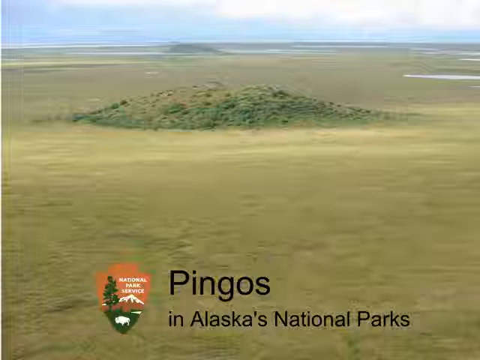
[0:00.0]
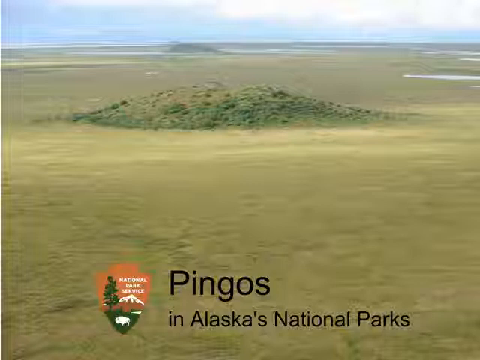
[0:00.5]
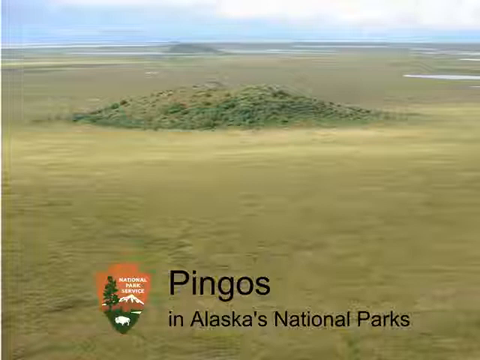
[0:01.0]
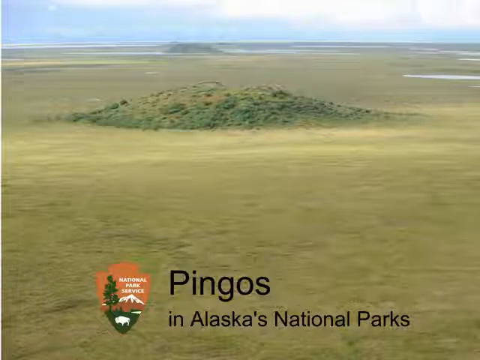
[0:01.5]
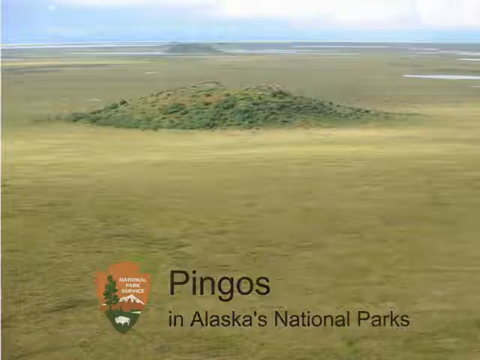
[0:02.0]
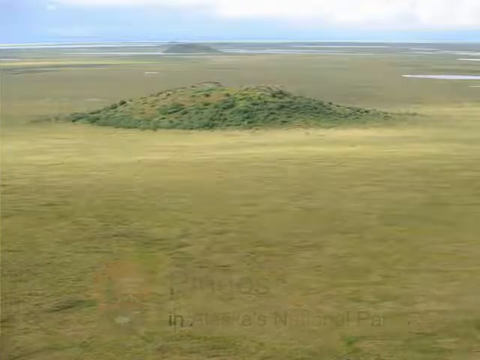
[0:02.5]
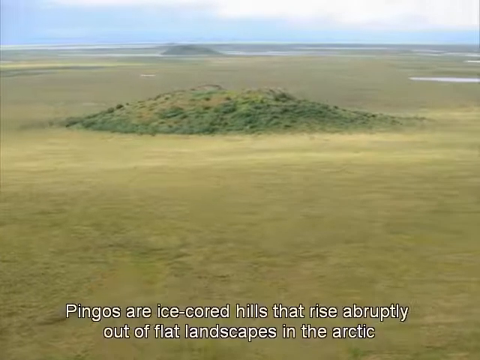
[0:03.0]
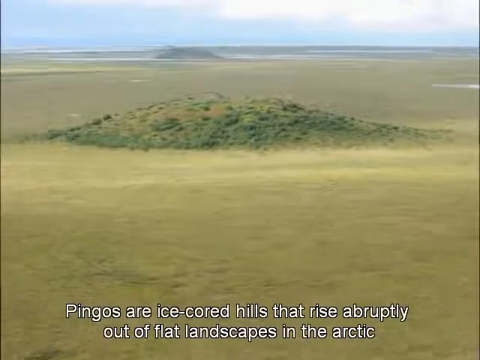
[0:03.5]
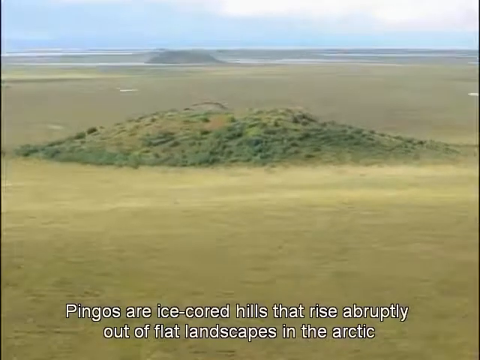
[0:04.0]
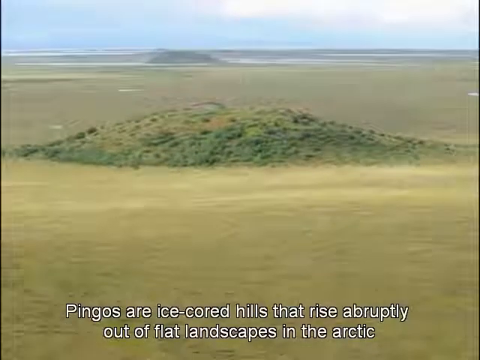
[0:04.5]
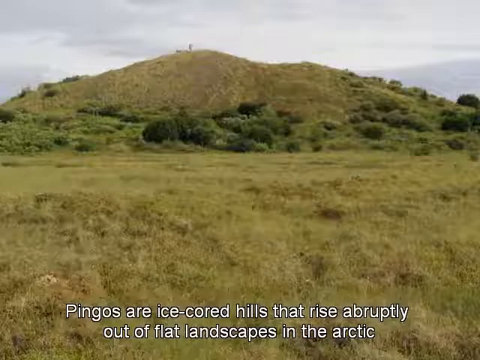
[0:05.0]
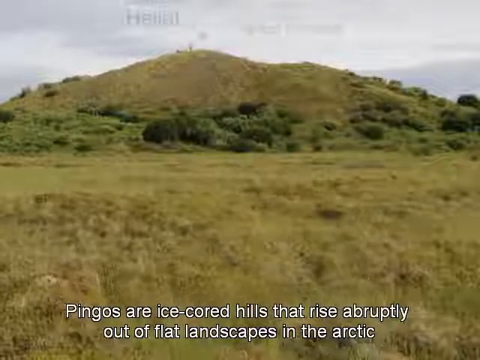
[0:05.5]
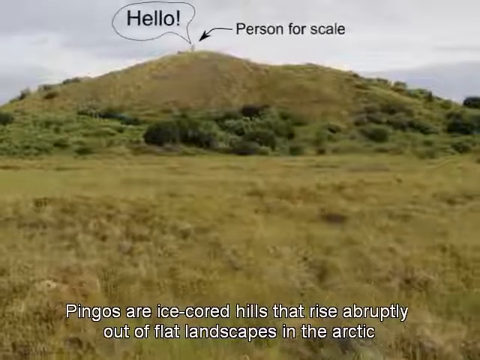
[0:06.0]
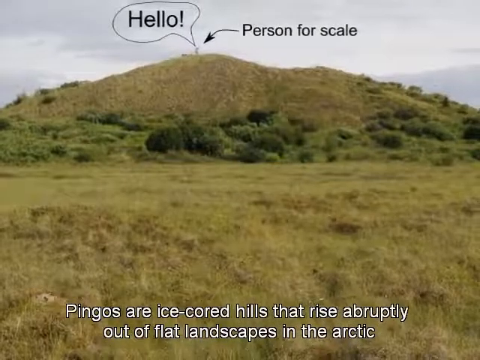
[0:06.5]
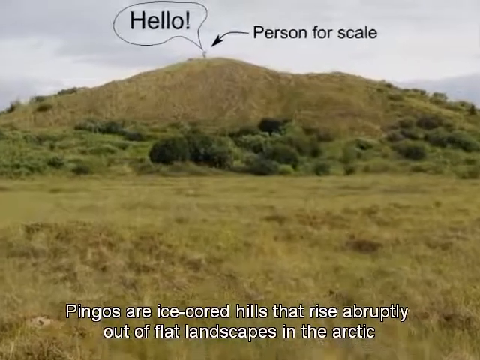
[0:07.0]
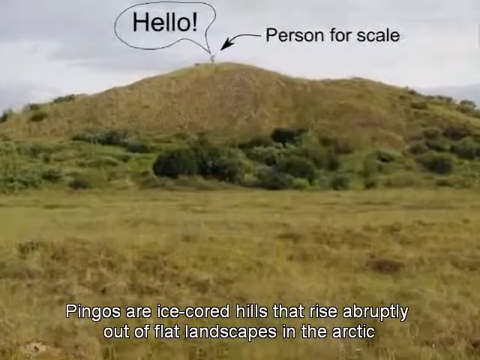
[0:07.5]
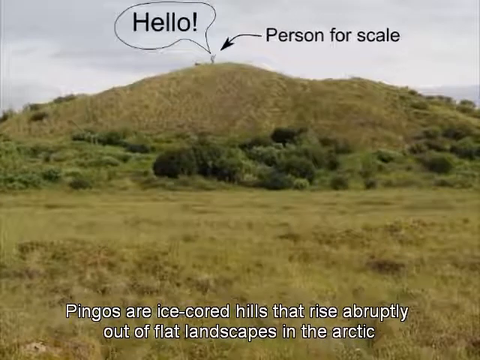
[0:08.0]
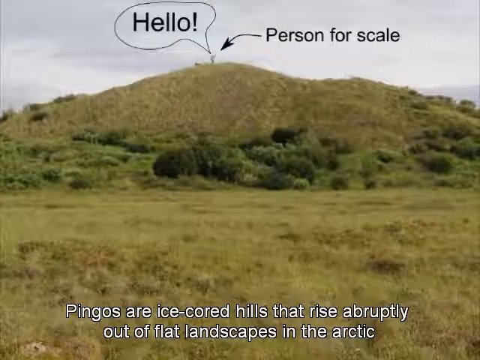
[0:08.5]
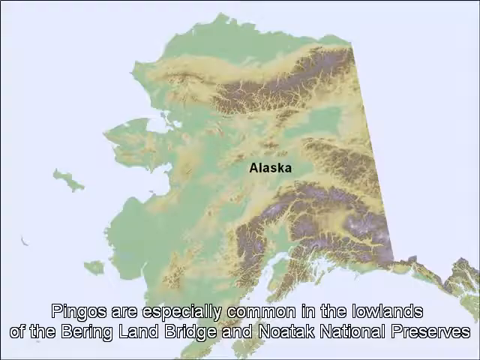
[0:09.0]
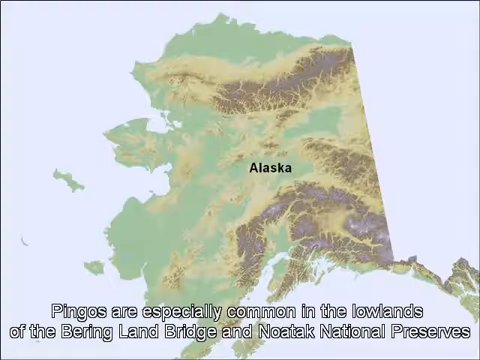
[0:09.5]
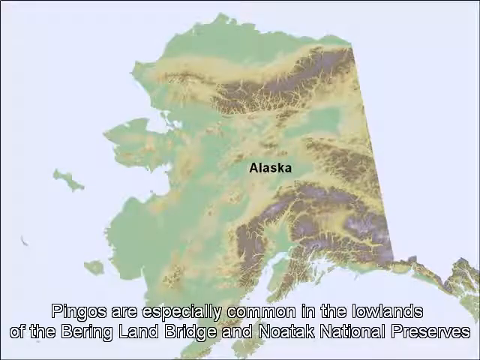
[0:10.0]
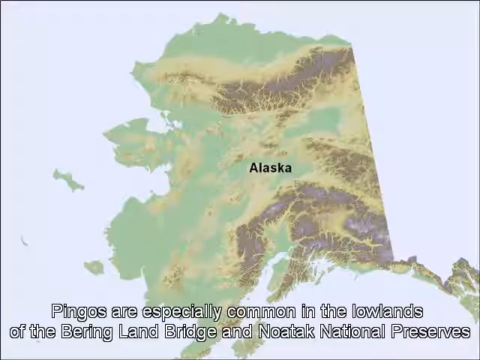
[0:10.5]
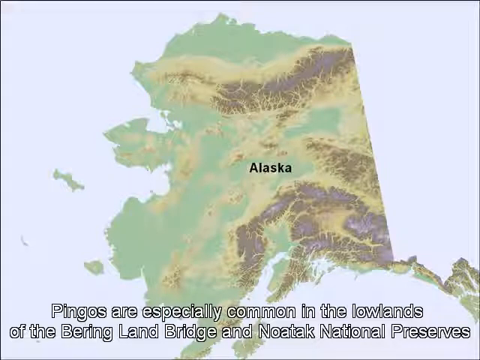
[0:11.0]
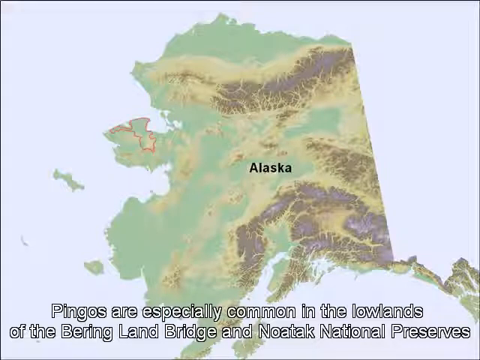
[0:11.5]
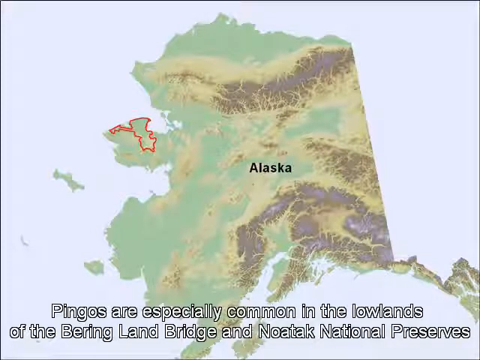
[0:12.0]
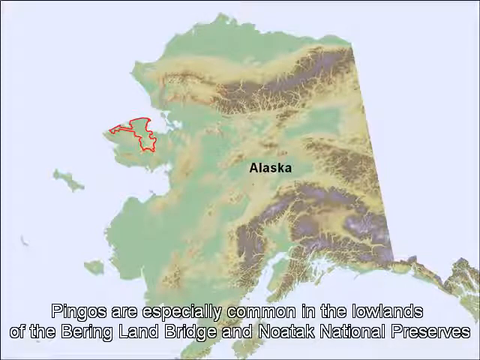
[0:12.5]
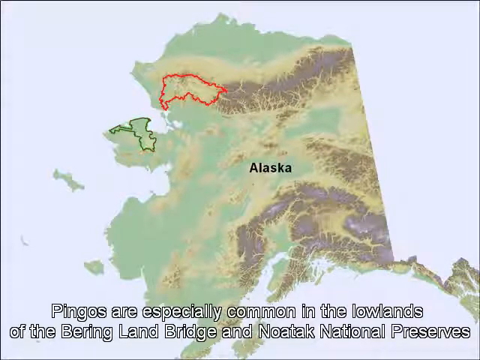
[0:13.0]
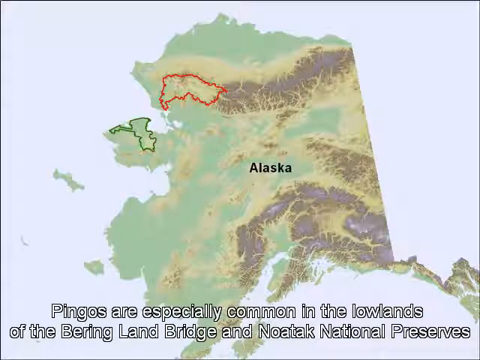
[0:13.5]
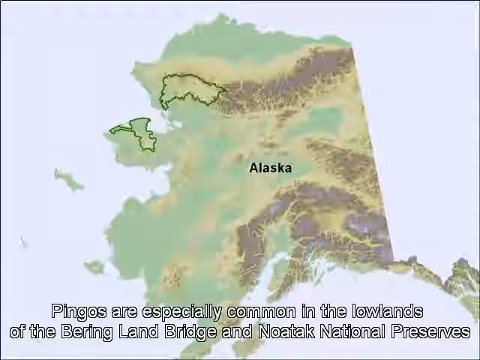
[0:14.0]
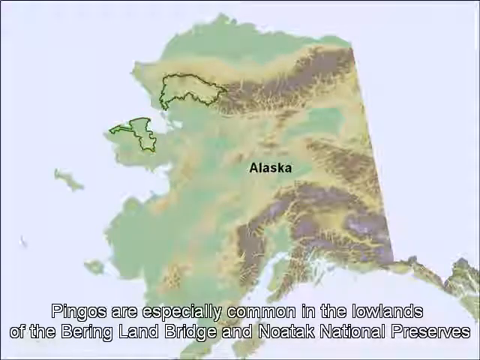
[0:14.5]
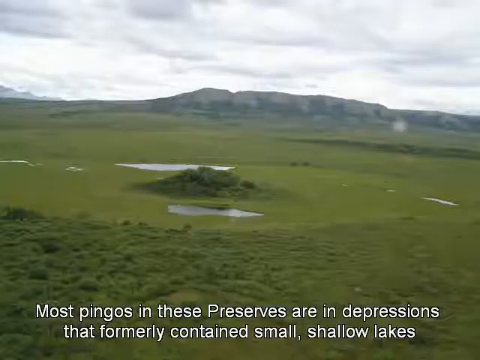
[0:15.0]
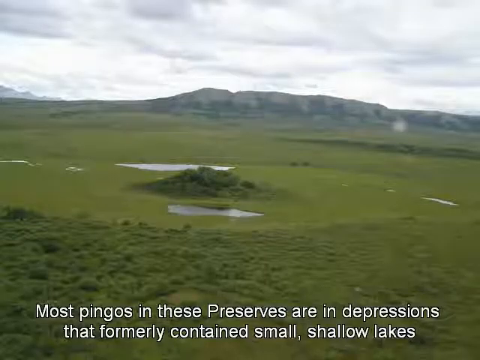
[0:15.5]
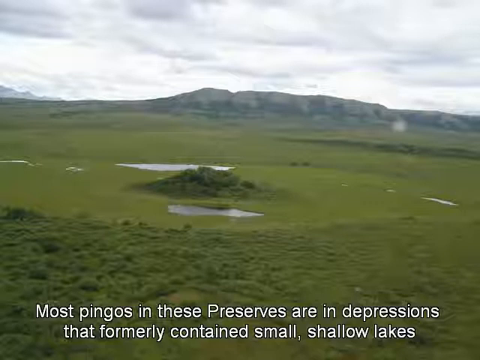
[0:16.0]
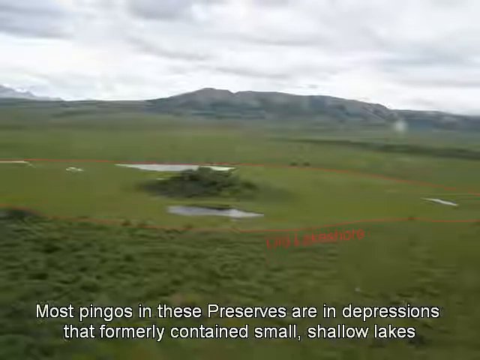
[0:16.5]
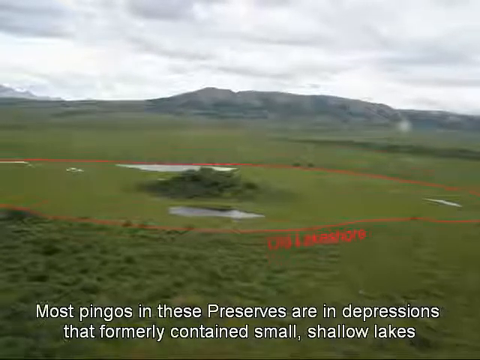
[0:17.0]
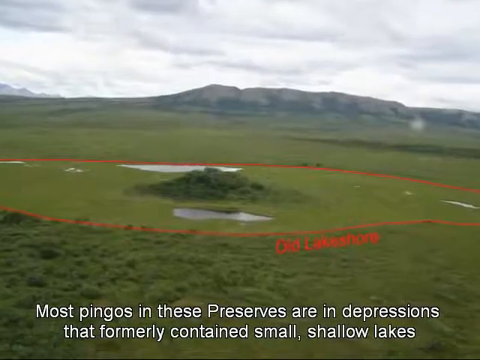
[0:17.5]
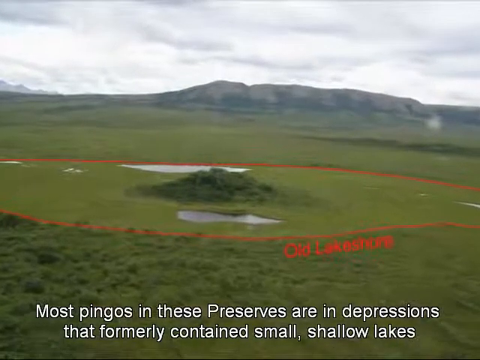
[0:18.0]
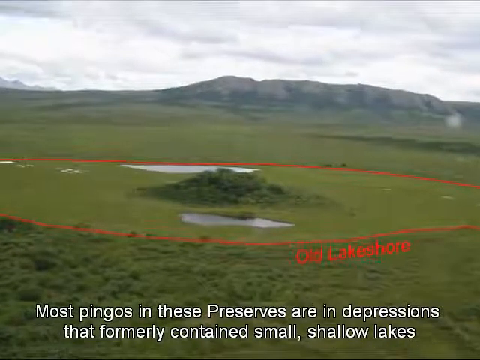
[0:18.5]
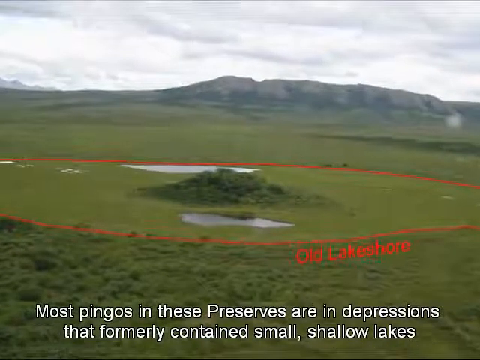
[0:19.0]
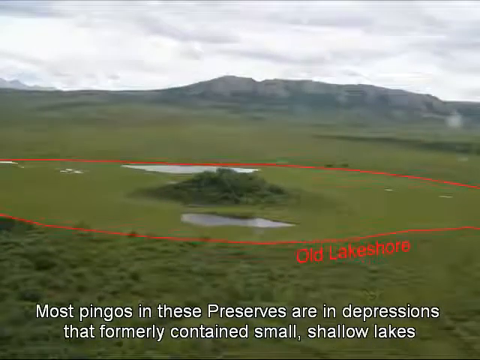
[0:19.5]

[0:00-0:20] The video opens on pingos in Alaska's national parks. A caption at the bottom reads "Pingos are ice-cold hills that rise abruptly out of flat landscapes in the Arctic. Pingos are especially common in the lowlands of the Bering Land Bridge and Noatak National Preserves, and most pingos in these preserves are in depressions that formerly contained small shallow lakes." The first image shows a green Alaskan landscape with a pingo rising in the middle of it and some vegetation on it. An orange, white and green National Park Service patch is also visible. The view then zooms into one of the pingos, where a person is on top of it, with the words "hello" and an arrow pointing at the person labeled "person for scale." As the zoom continues, a map of Alaska appears showing green, yellow and brown surfaces on the ground, and another picture shows a pingo in the middle of a green landscape with a big red circle around it and the words "old lakeshore."